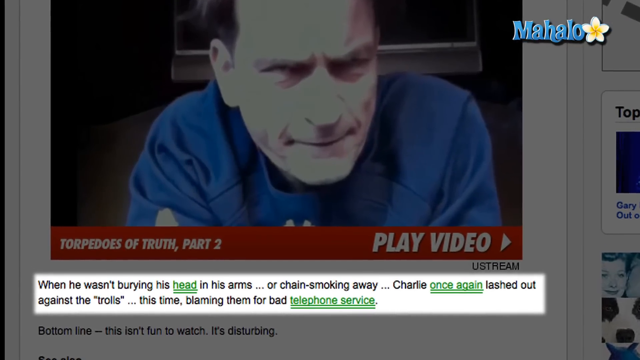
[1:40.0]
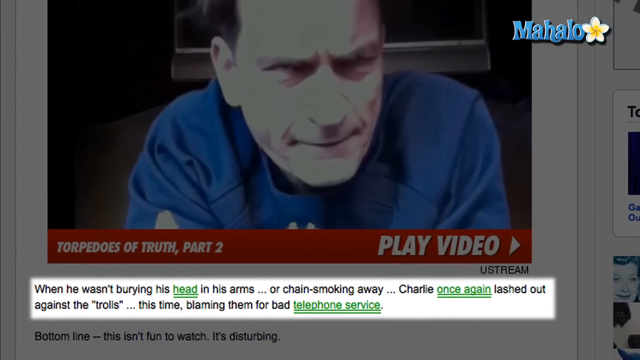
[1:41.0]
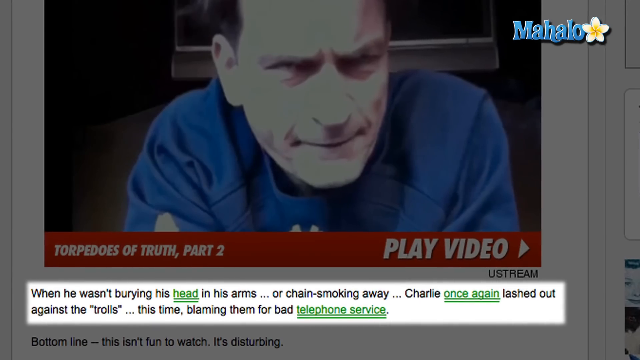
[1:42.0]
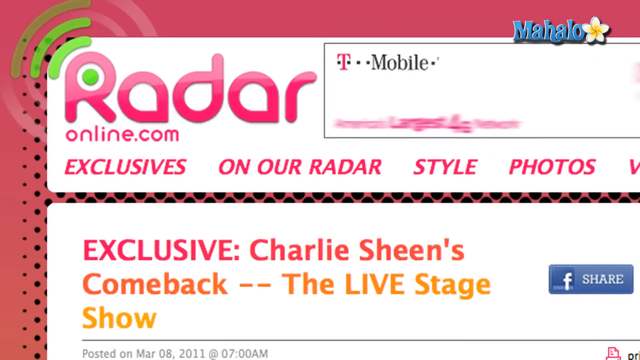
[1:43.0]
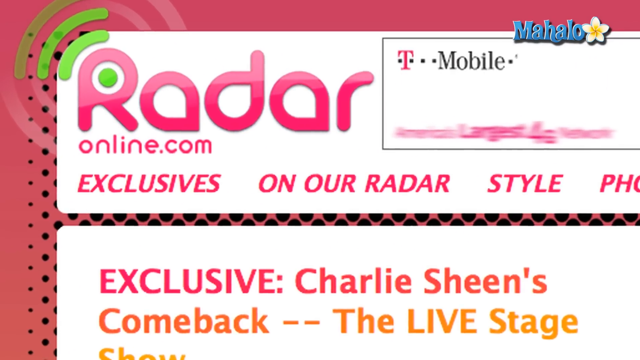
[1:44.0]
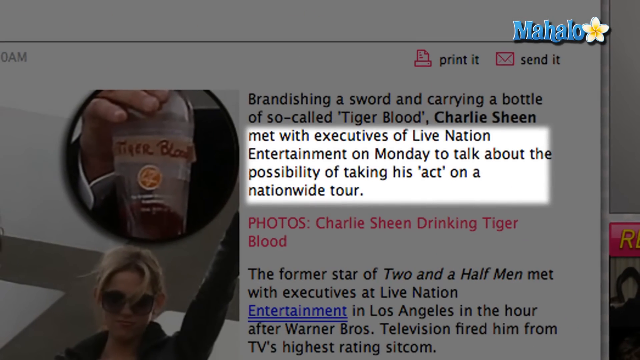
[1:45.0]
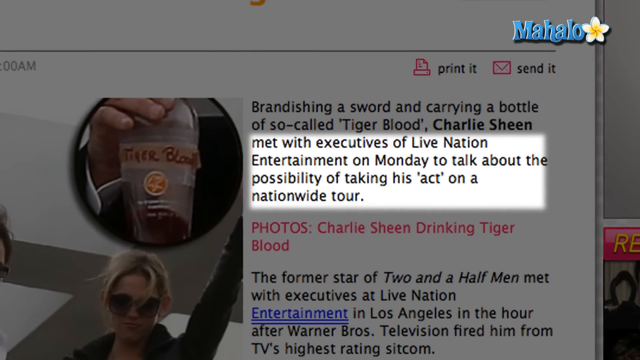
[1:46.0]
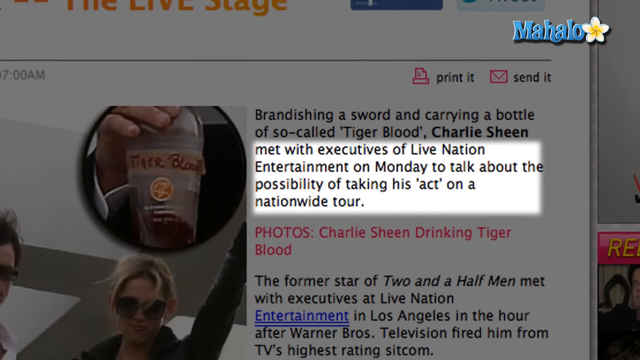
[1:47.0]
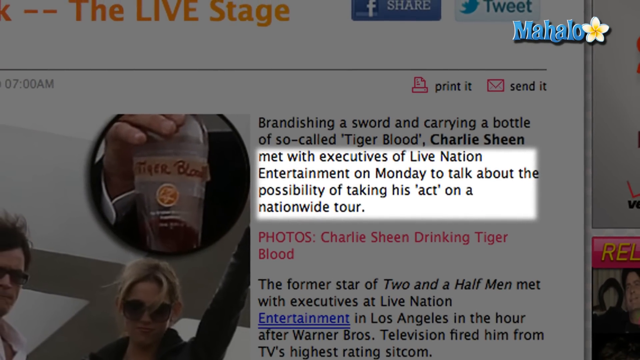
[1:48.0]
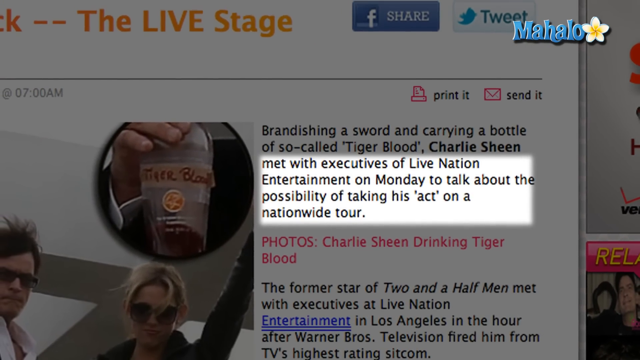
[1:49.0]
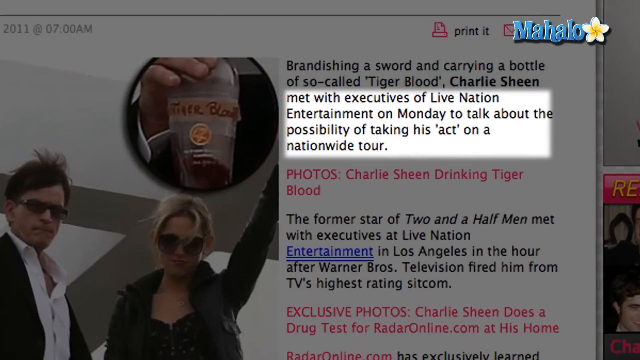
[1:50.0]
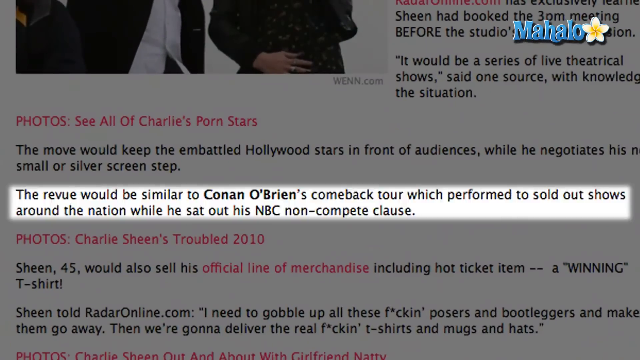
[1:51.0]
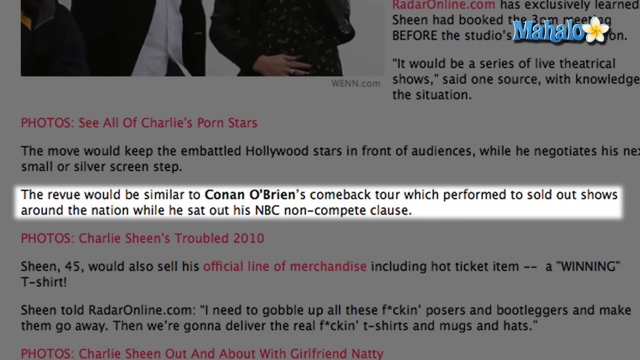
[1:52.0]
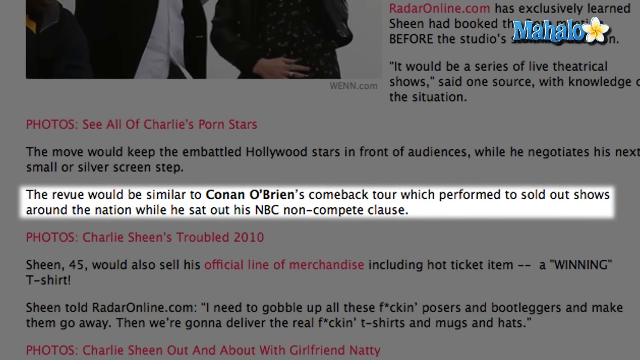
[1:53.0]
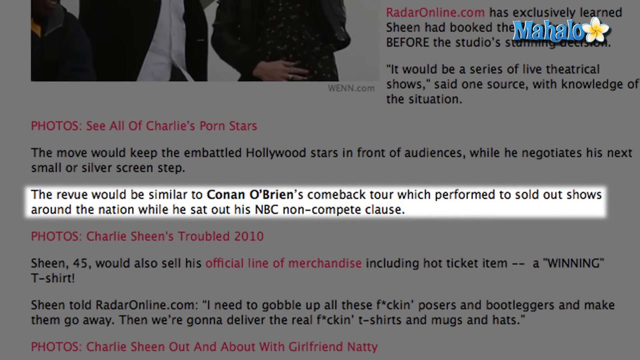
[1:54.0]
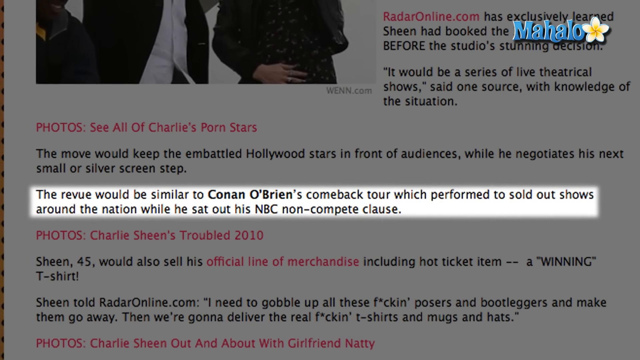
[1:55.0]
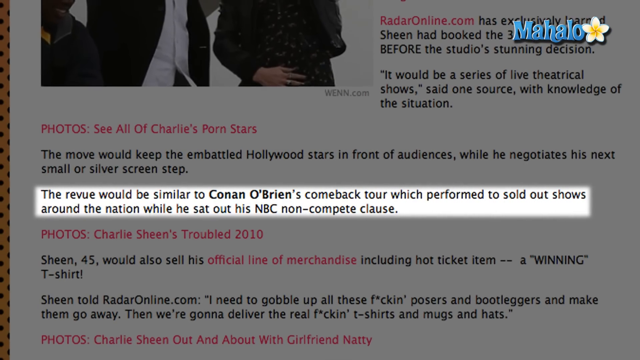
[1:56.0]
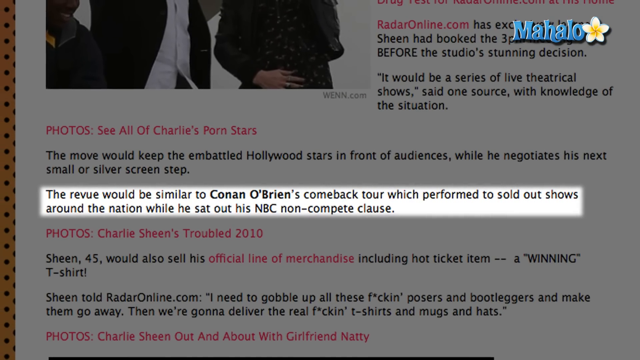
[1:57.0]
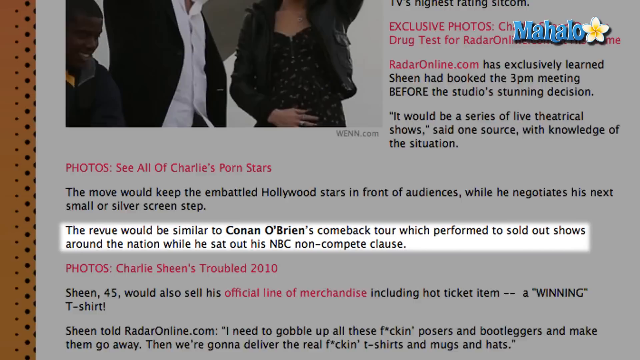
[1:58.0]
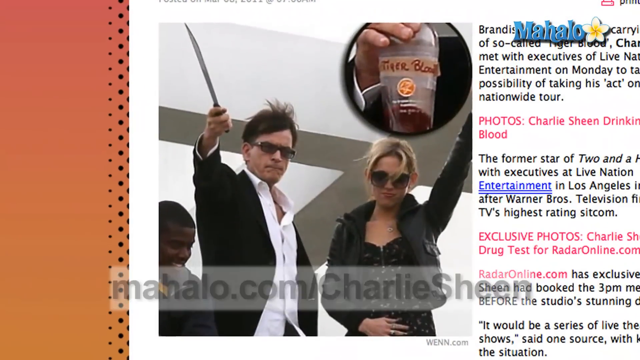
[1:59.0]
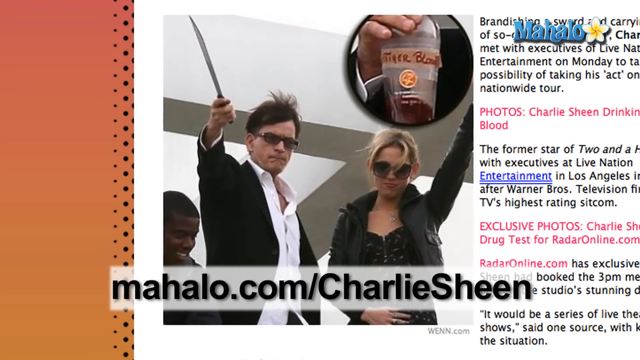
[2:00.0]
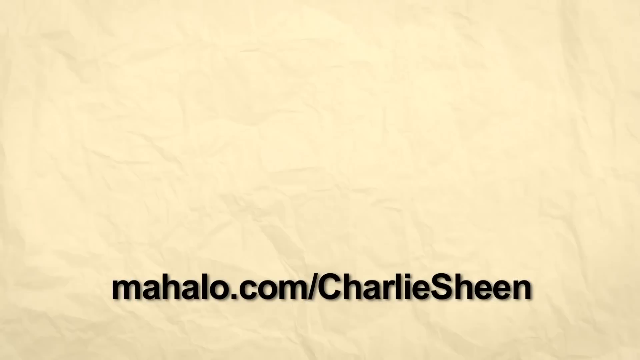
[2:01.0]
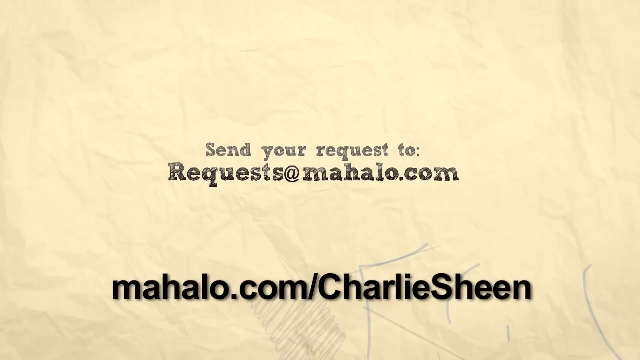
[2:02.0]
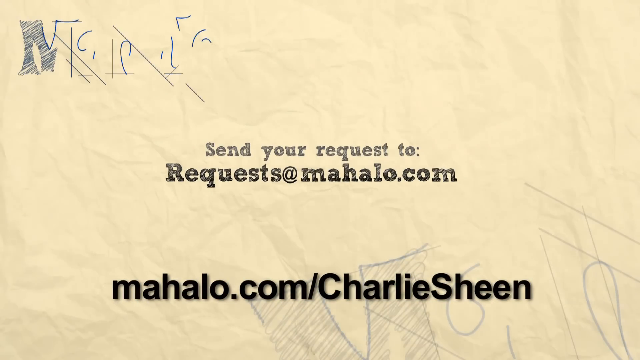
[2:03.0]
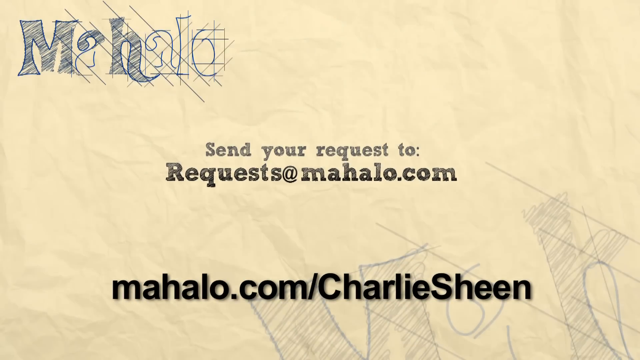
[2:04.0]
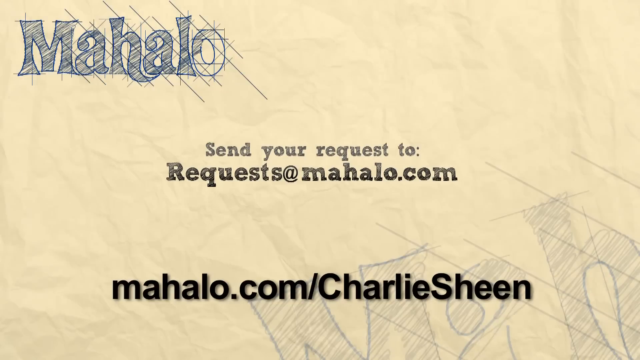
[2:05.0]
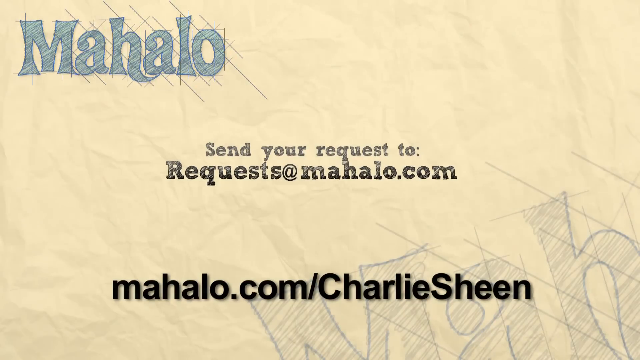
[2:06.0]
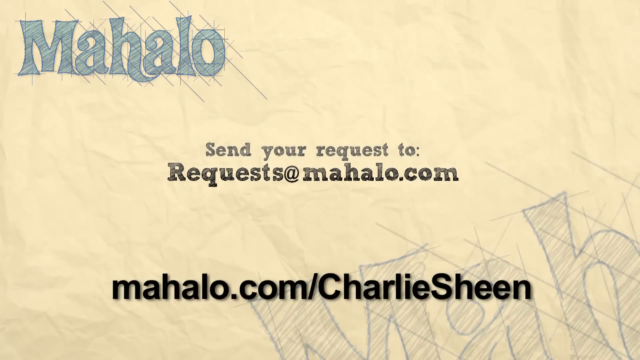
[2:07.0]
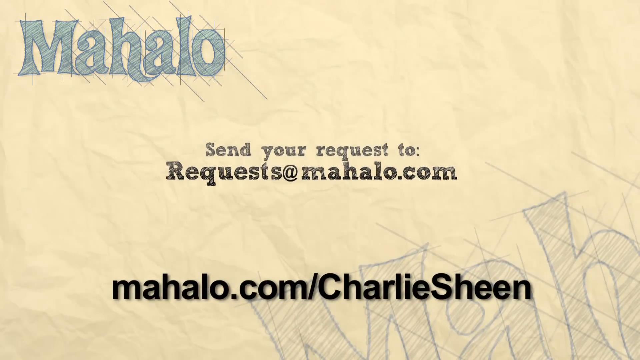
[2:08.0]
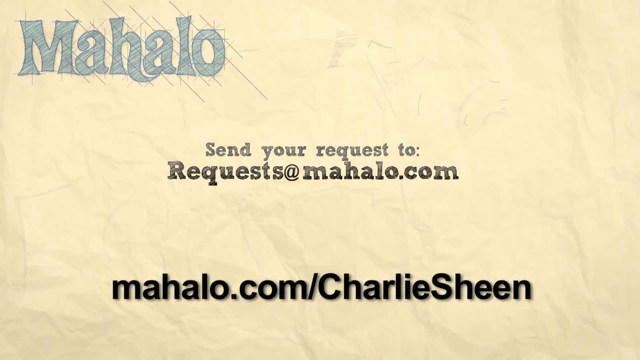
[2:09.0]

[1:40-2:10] Charlie Sheen is seen drinking tiger blood, and the report covers his meeting with executives of Live Nation Entertainment about a possible nationwide tour, along with a line of merchandise including a "winning" T-shirt.